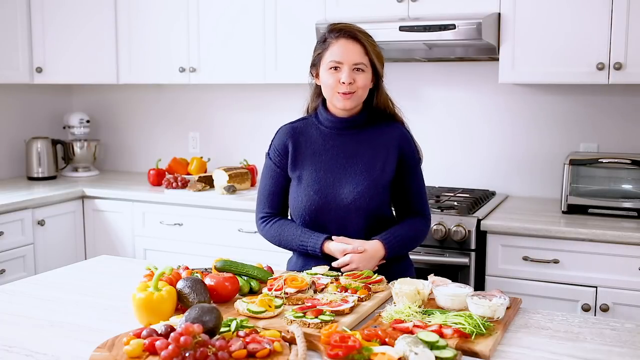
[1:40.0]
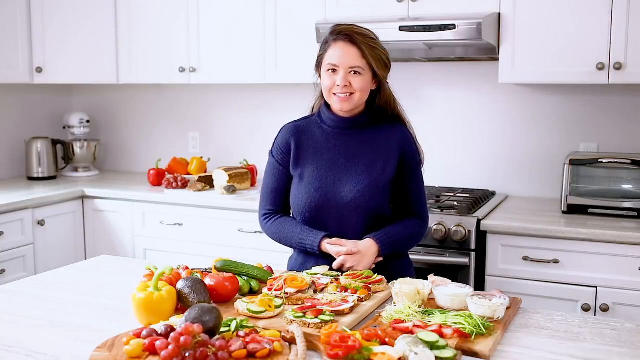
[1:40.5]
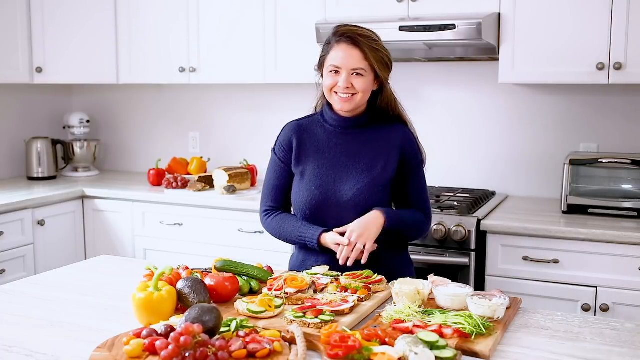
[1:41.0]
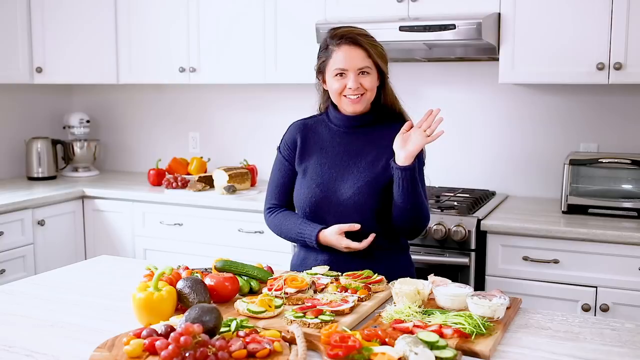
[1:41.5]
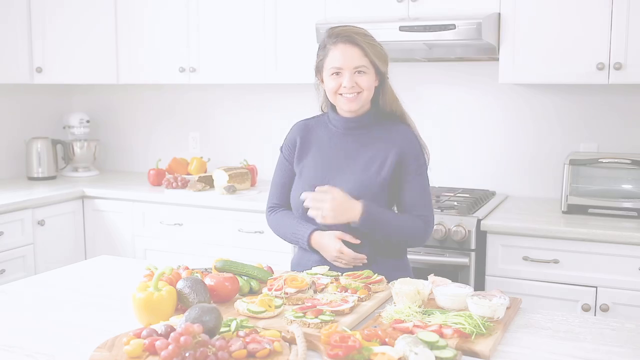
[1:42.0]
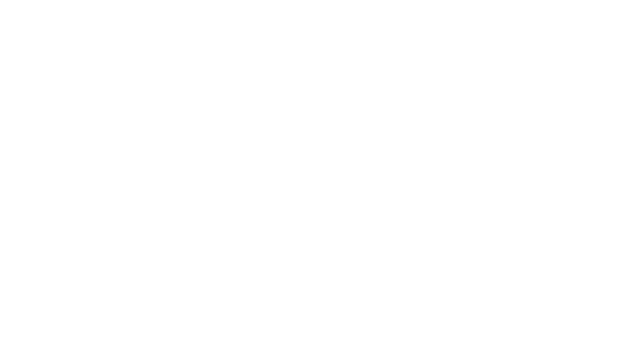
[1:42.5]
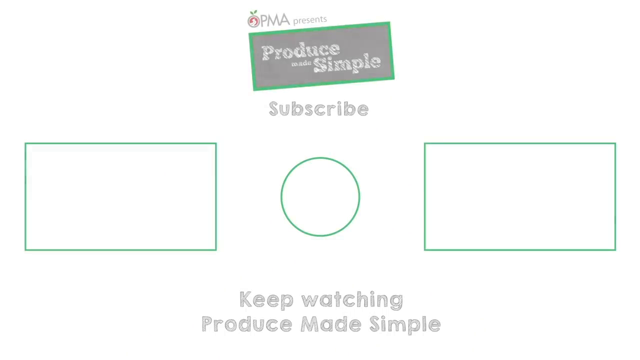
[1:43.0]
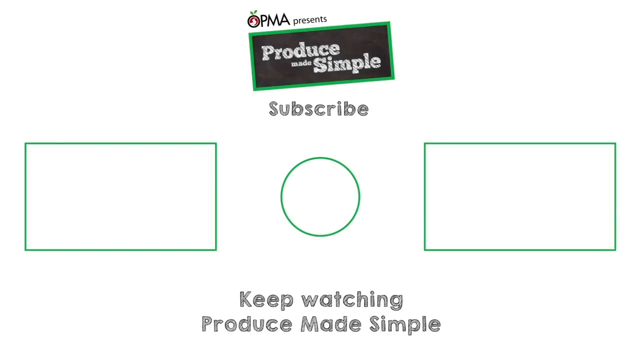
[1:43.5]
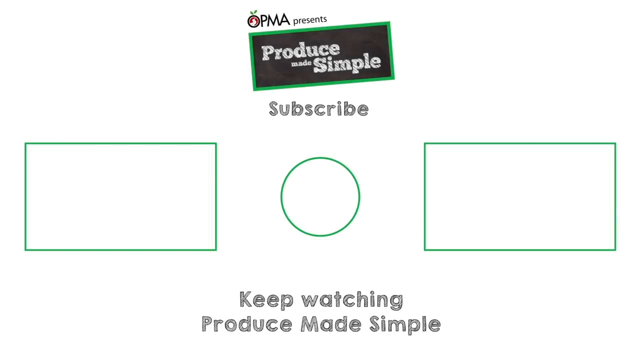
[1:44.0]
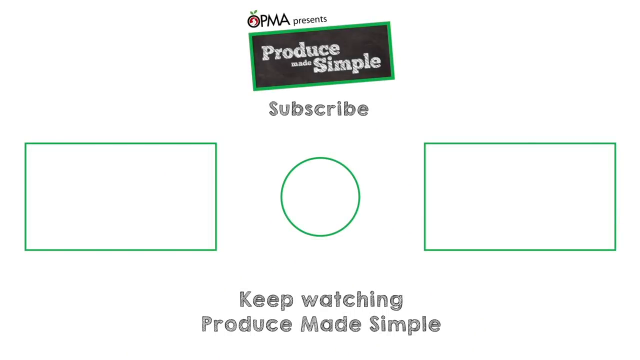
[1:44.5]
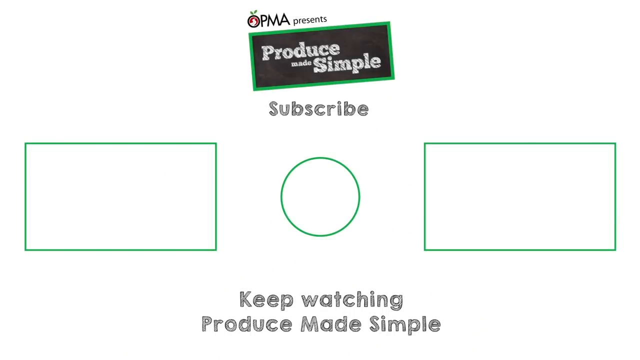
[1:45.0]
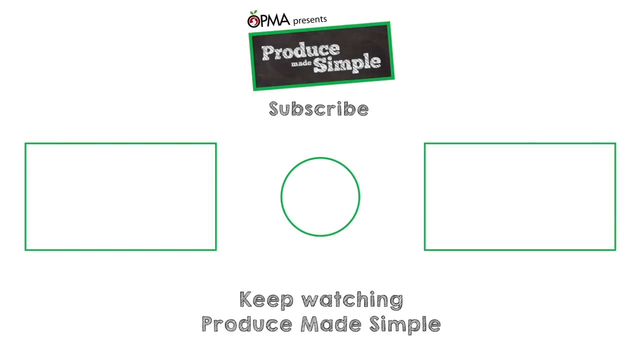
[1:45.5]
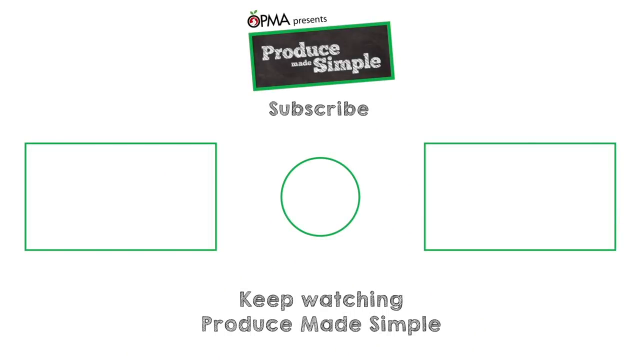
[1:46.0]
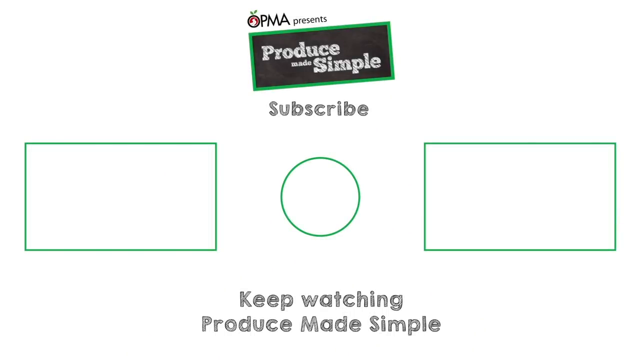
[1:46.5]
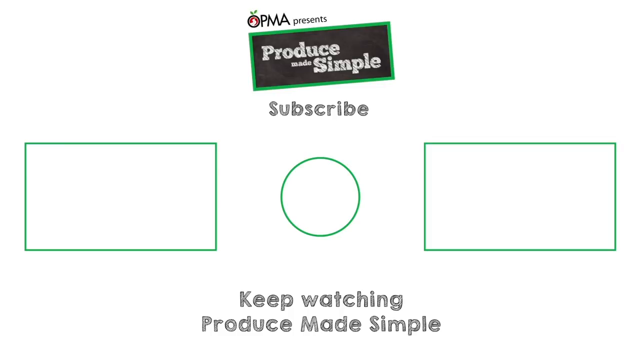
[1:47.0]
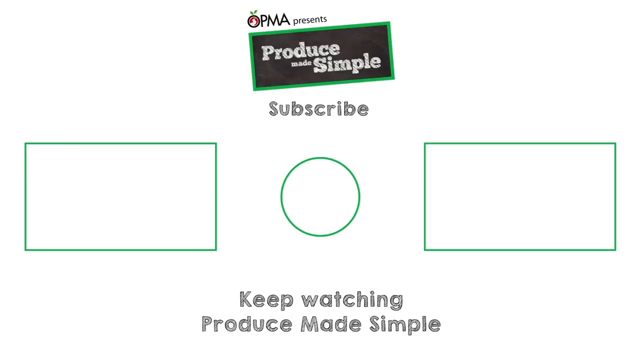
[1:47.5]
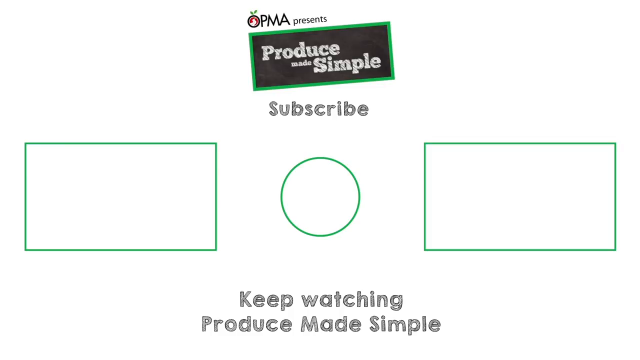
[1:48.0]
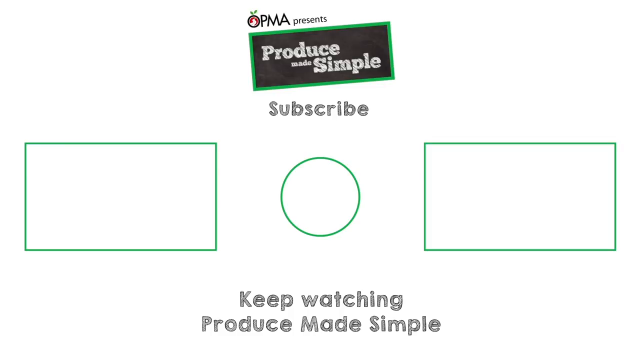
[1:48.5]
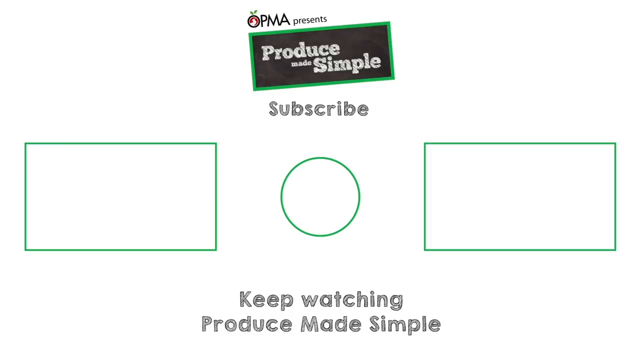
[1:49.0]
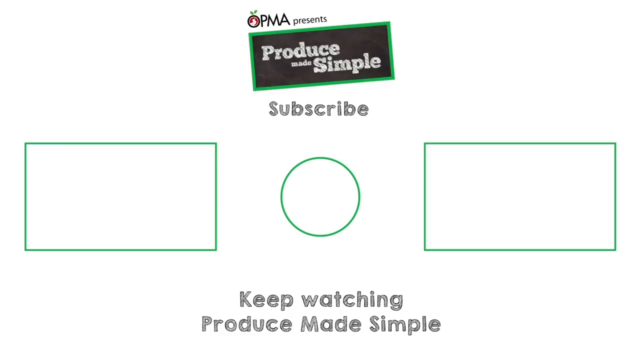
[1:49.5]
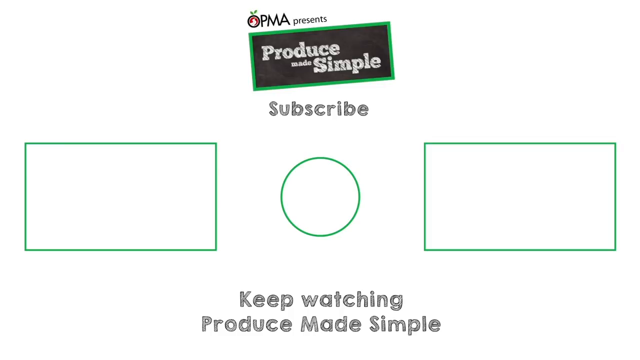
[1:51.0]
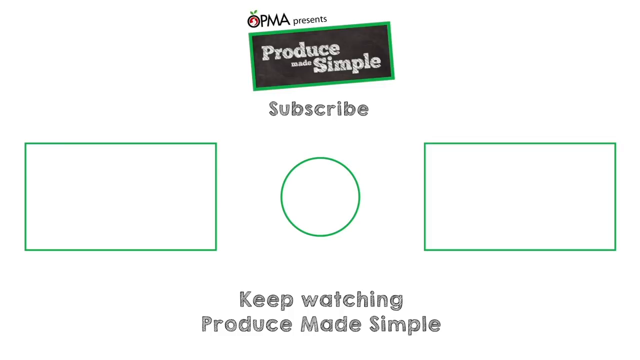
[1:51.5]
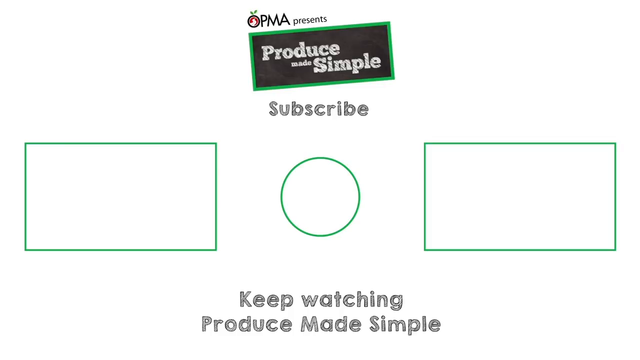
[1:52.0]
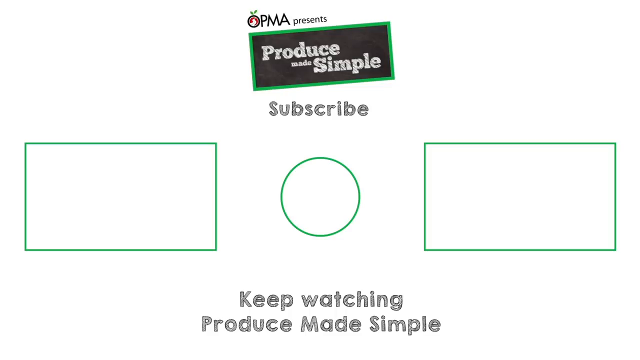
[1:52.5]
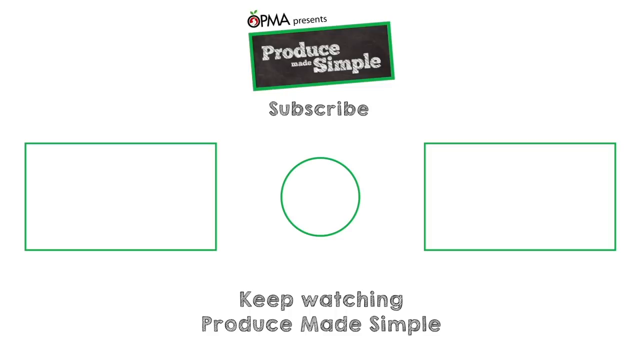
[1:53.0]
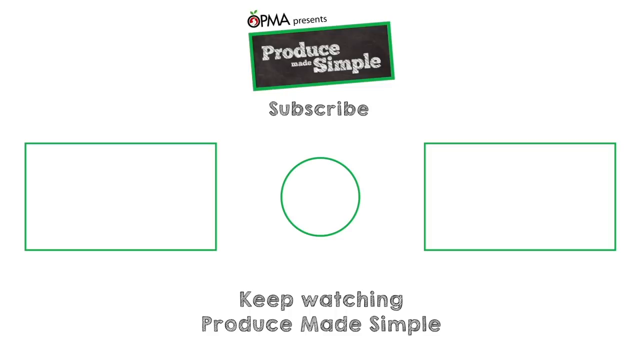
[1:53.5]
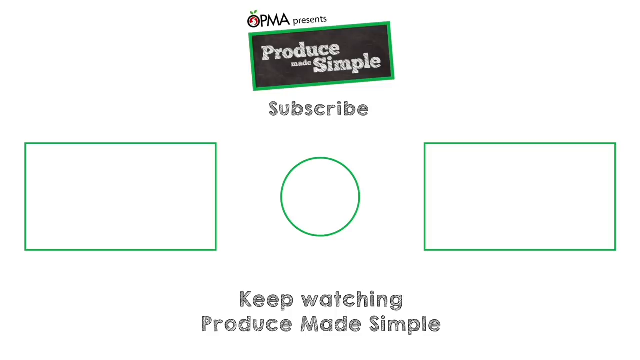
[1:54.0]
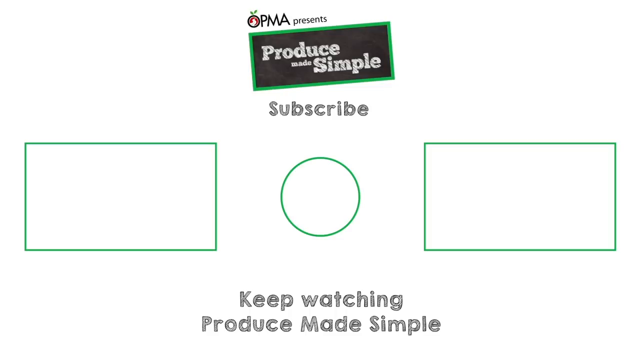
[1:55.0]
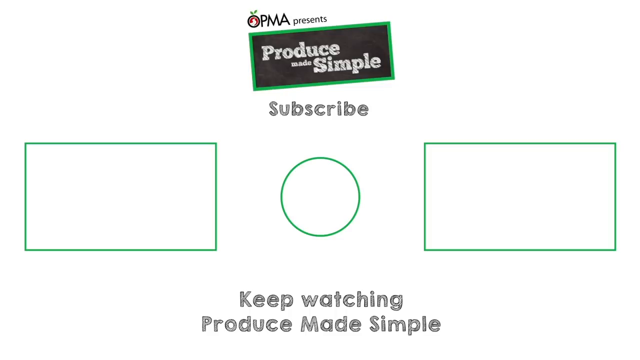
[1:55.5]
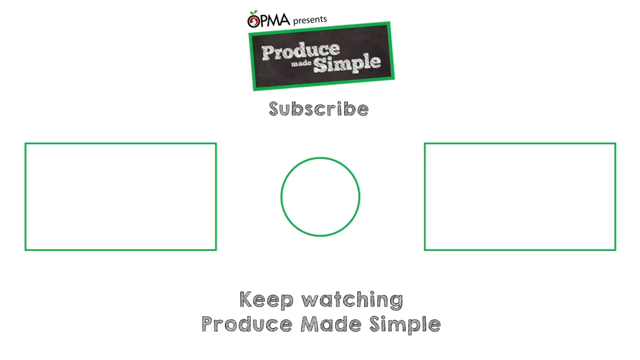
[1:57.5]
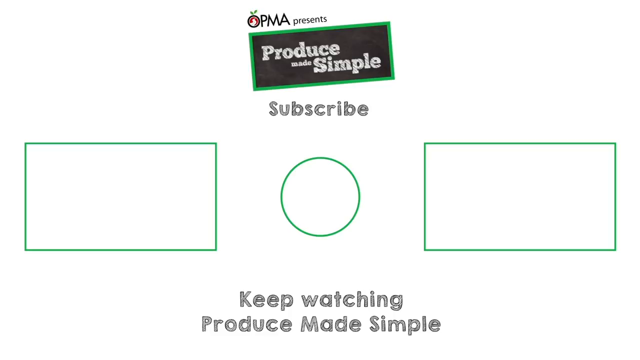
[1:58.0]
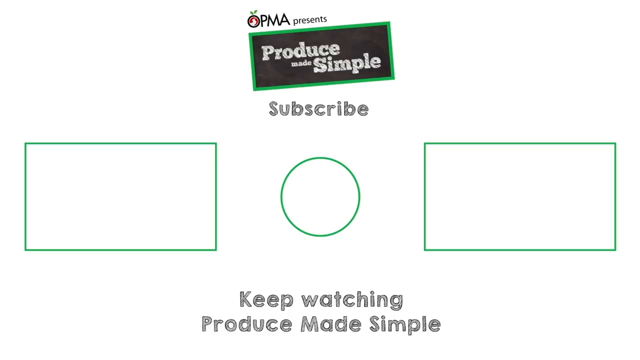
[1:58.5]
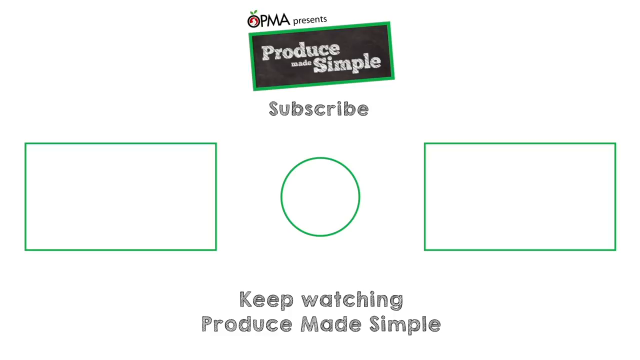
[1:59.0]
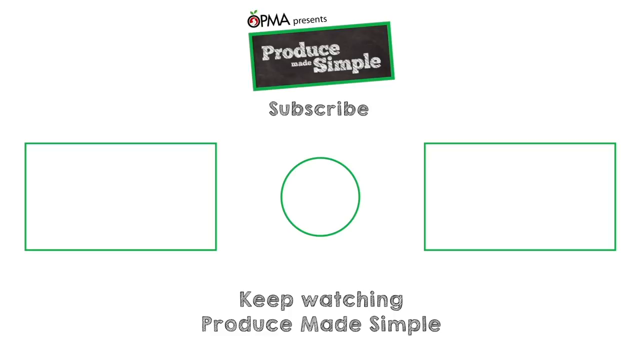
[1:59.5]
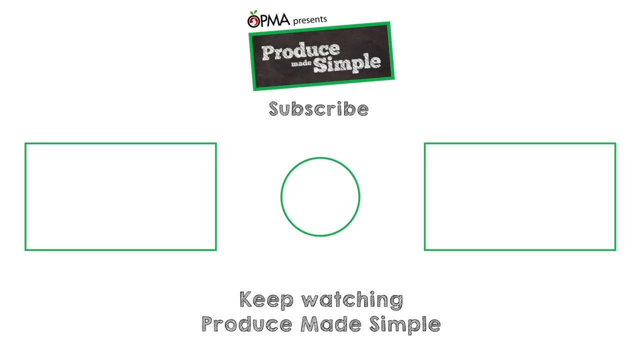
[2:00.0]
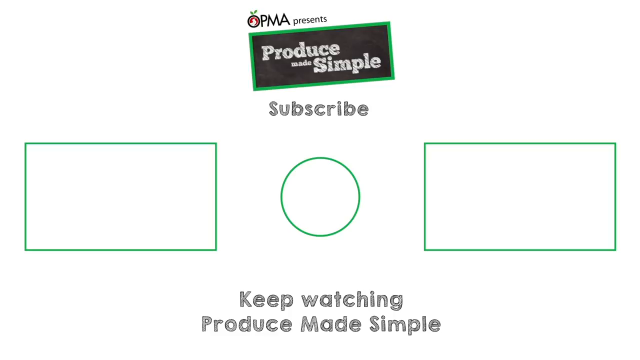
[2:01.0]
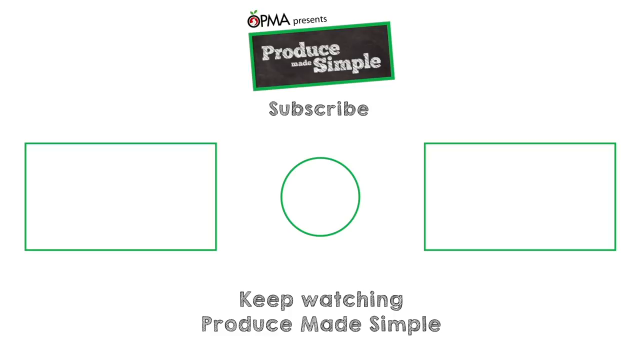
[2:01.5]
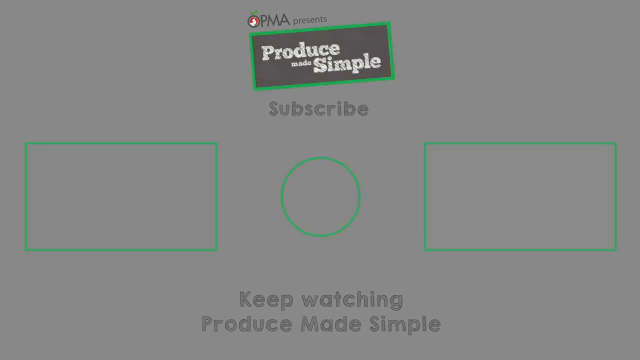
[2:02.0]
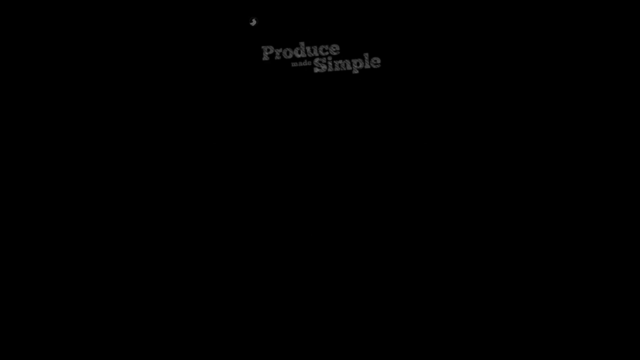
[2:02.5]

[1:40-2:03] The woman, on camera in the kitchen, continues explaining the last steps, moving her hand as she shows how she prepares the sandwich. The video ends with an animation showing "Produce Made Simple", "subscribe" and "keep watching Produce Made Simple". The animation has two rectangles on the sides and a green circle in the middle, and at the top a rectangle with dark coloring inside where "Produce Made Simple" is written, which is their logo.